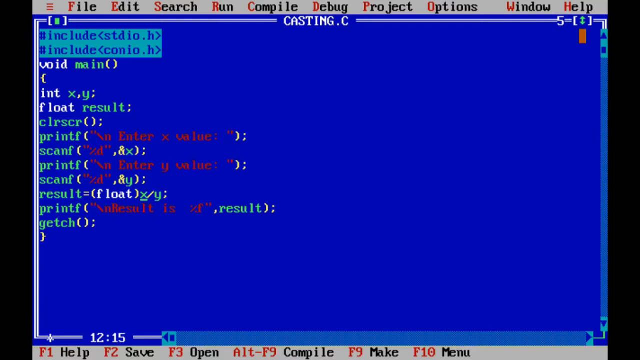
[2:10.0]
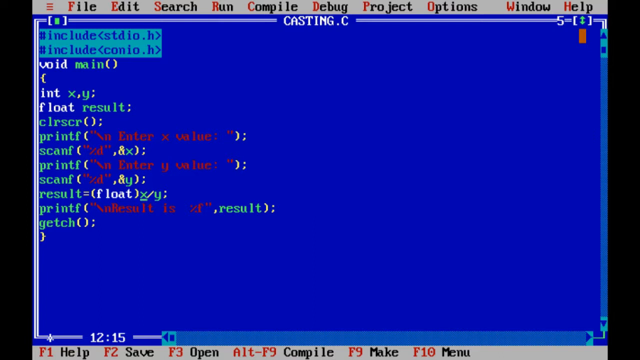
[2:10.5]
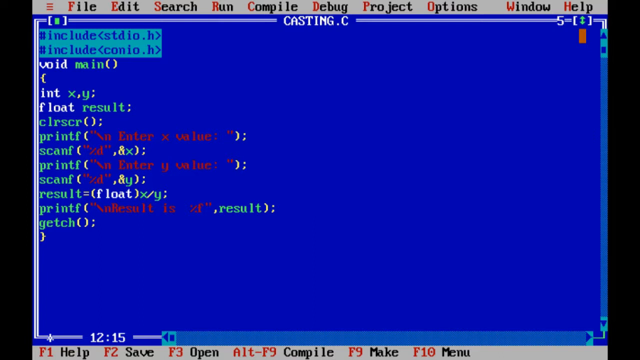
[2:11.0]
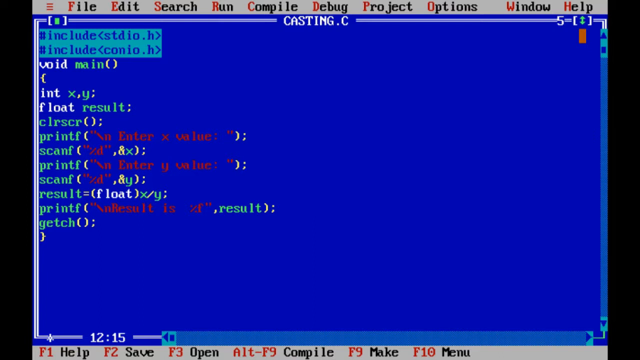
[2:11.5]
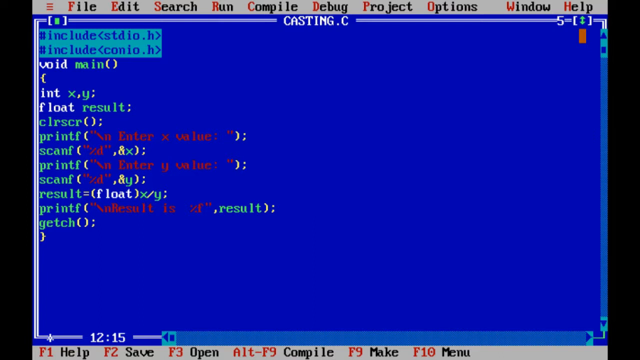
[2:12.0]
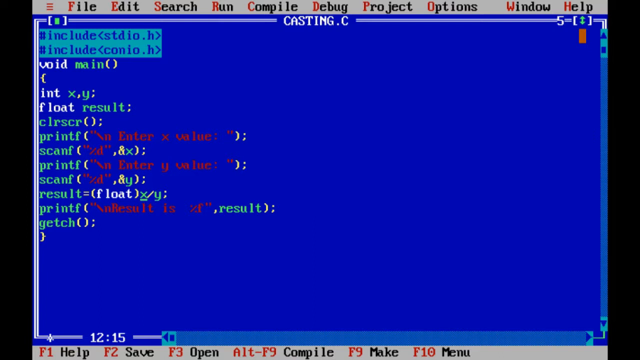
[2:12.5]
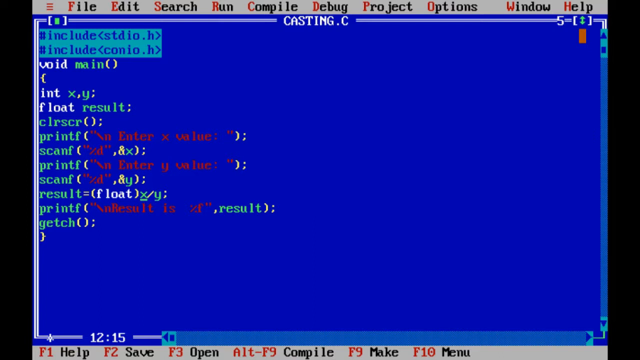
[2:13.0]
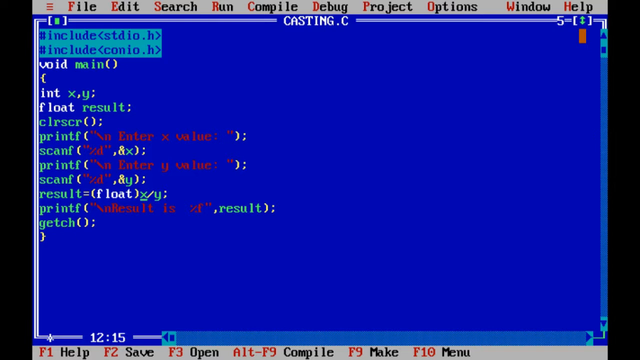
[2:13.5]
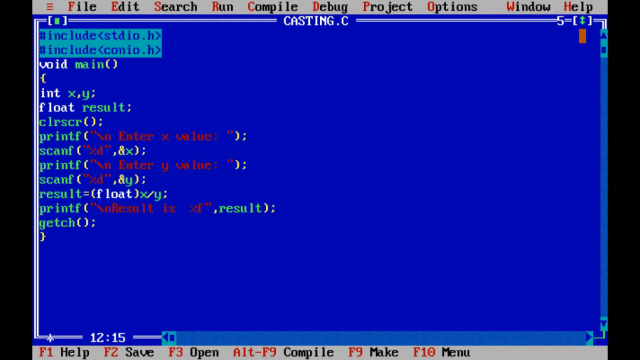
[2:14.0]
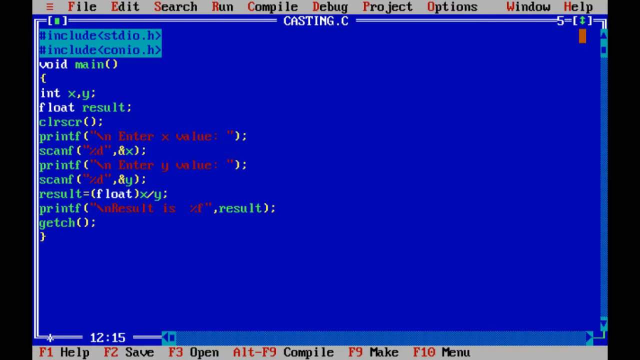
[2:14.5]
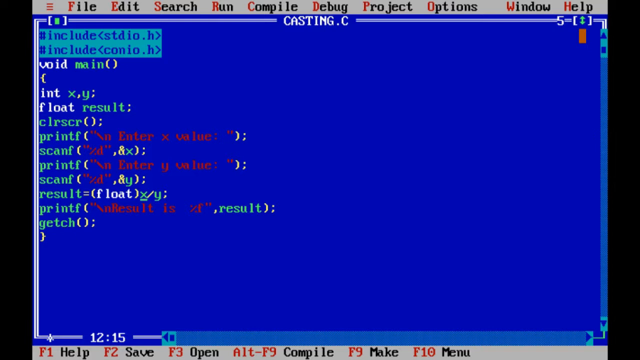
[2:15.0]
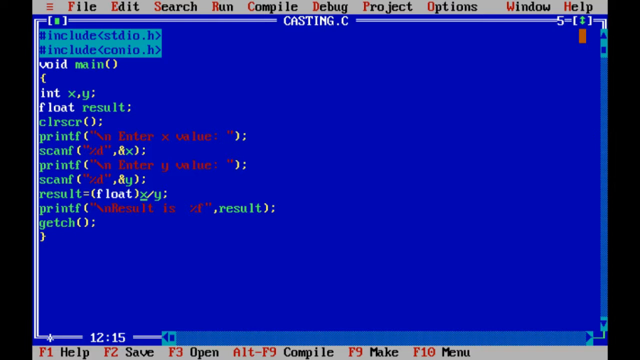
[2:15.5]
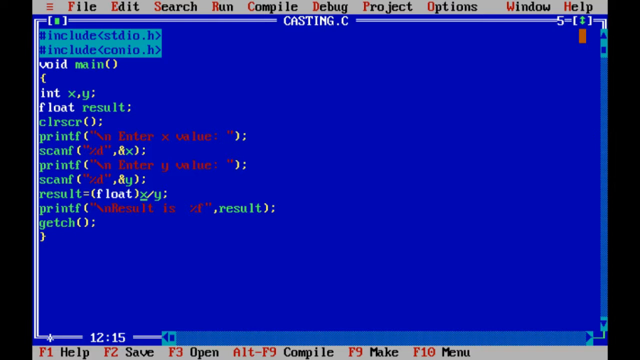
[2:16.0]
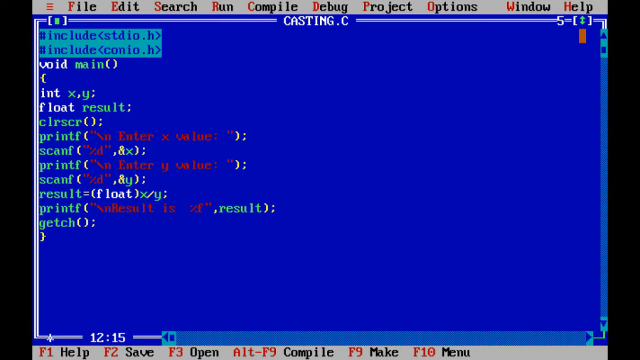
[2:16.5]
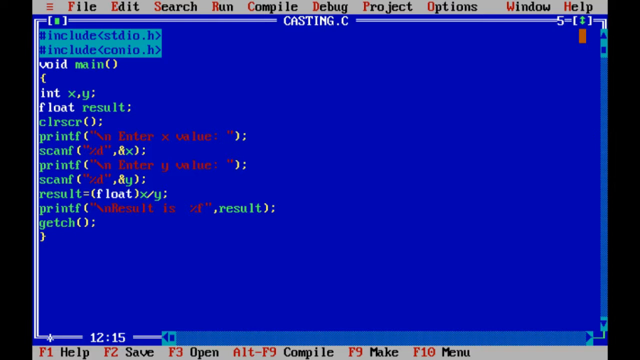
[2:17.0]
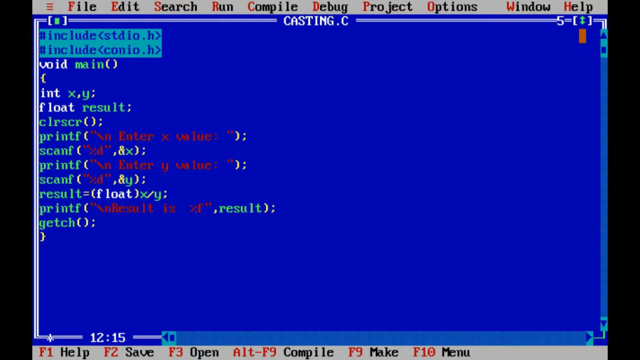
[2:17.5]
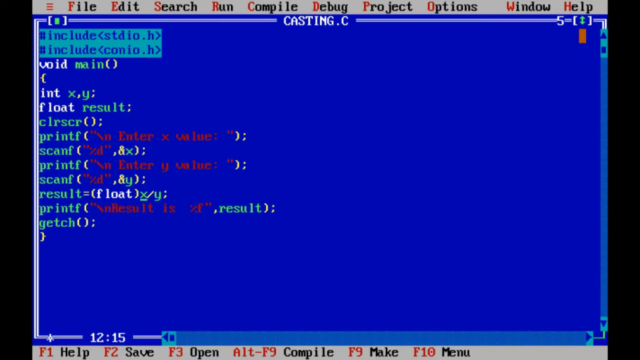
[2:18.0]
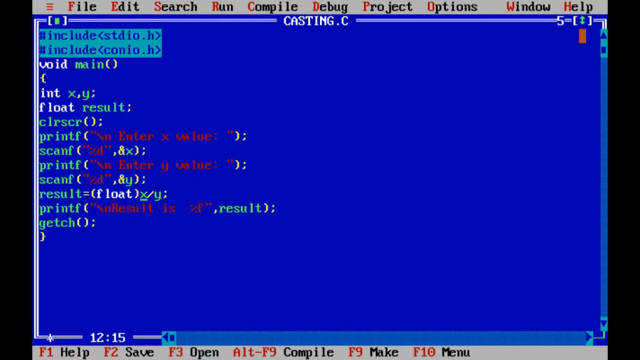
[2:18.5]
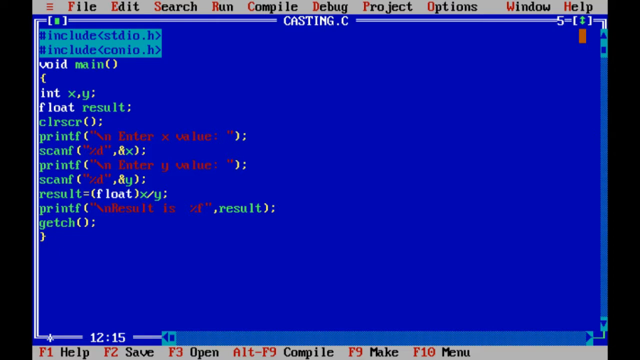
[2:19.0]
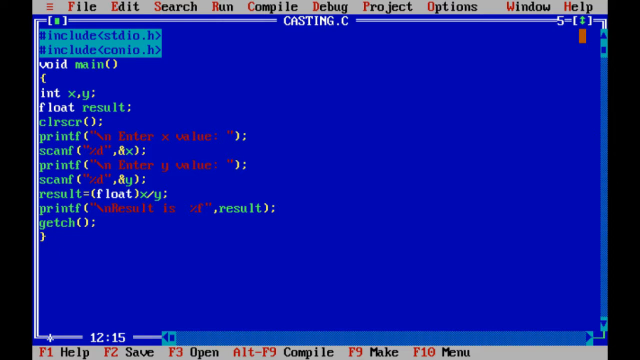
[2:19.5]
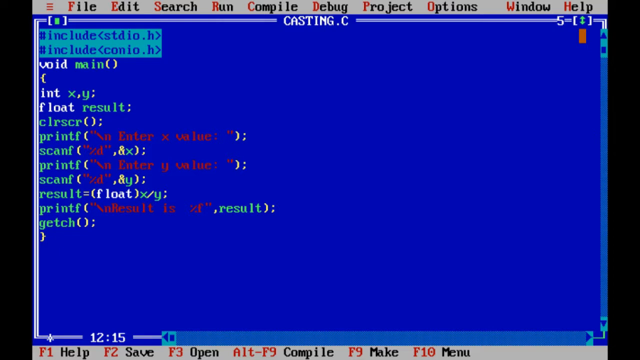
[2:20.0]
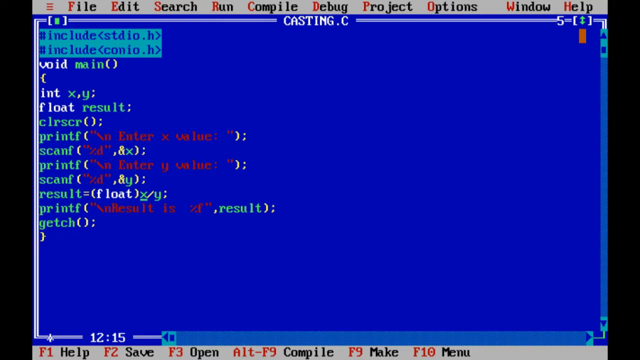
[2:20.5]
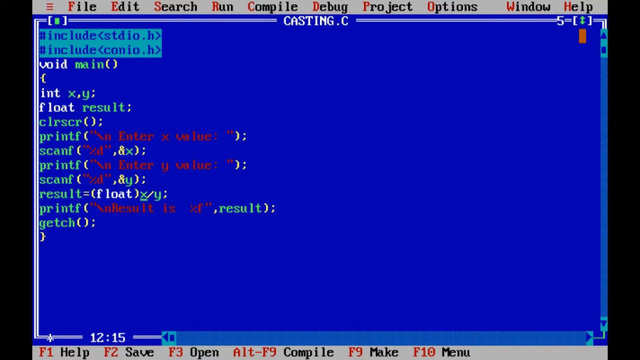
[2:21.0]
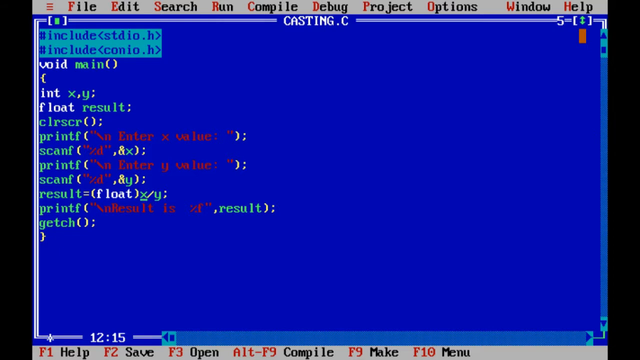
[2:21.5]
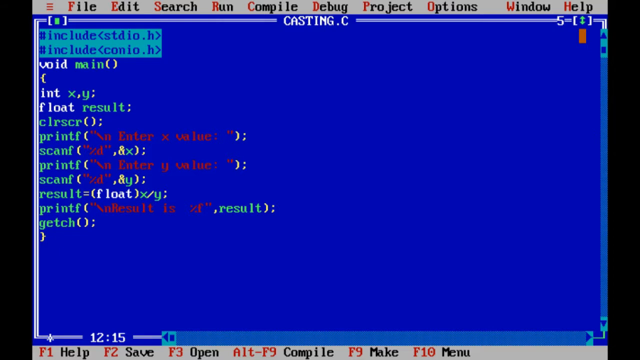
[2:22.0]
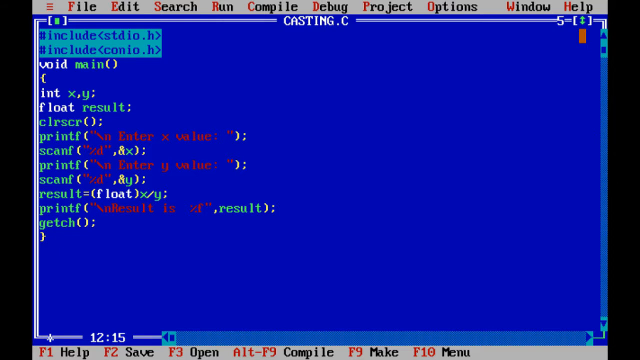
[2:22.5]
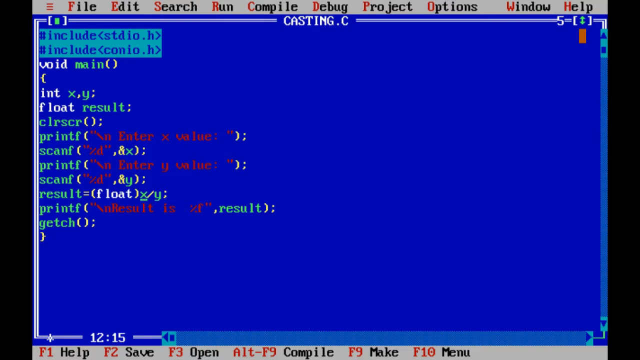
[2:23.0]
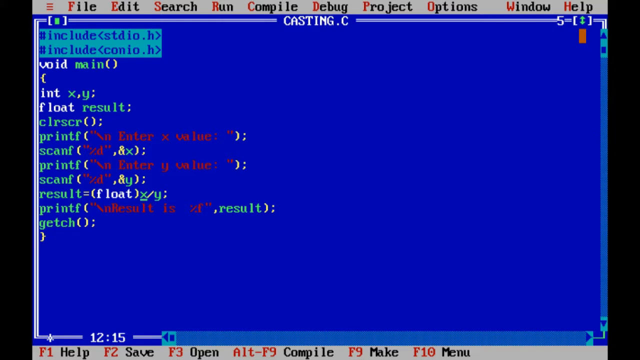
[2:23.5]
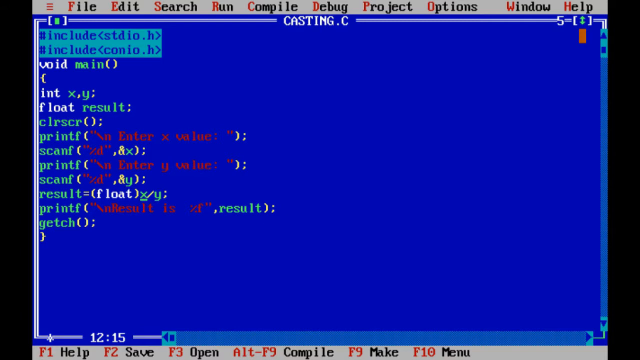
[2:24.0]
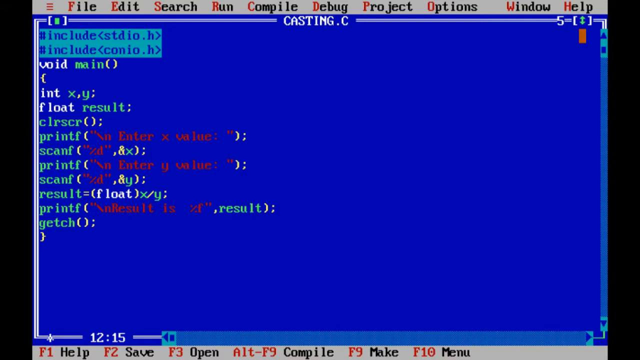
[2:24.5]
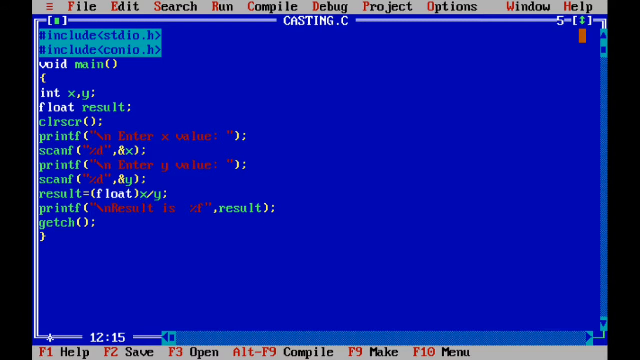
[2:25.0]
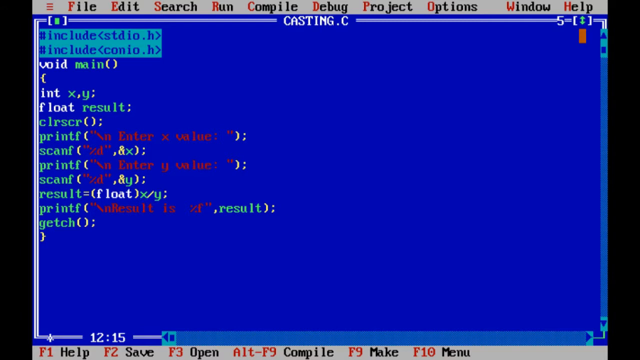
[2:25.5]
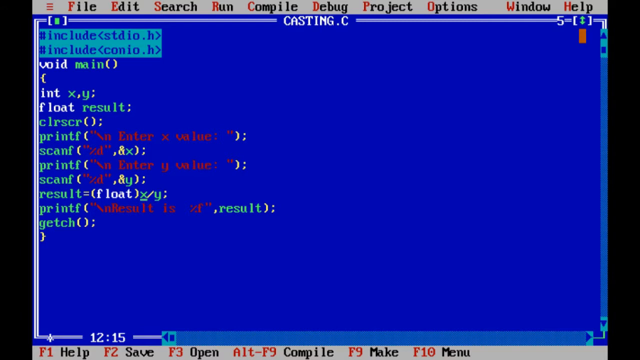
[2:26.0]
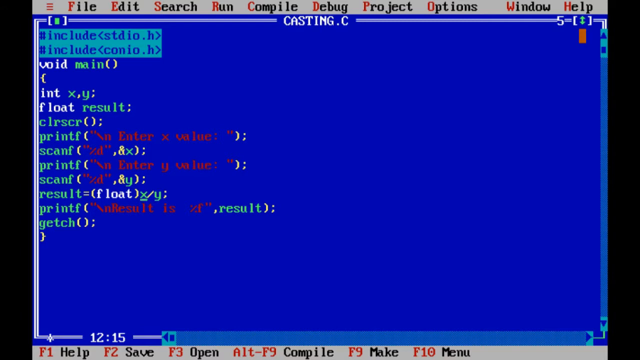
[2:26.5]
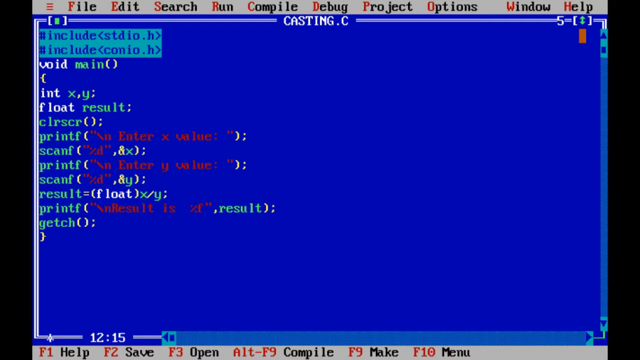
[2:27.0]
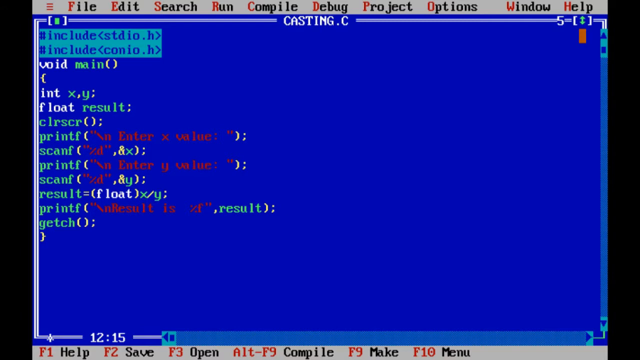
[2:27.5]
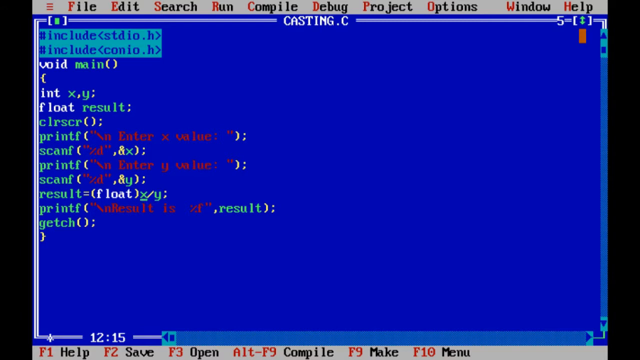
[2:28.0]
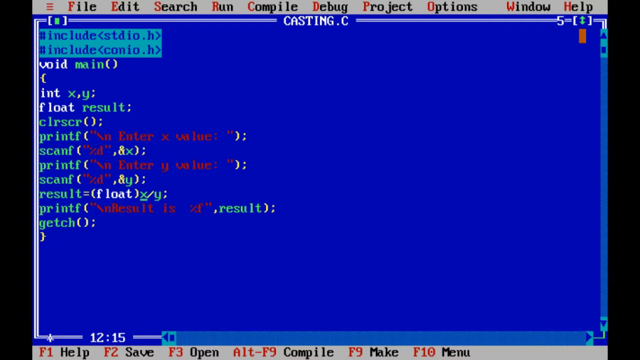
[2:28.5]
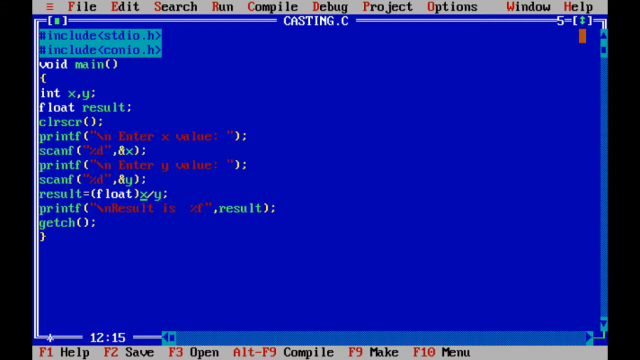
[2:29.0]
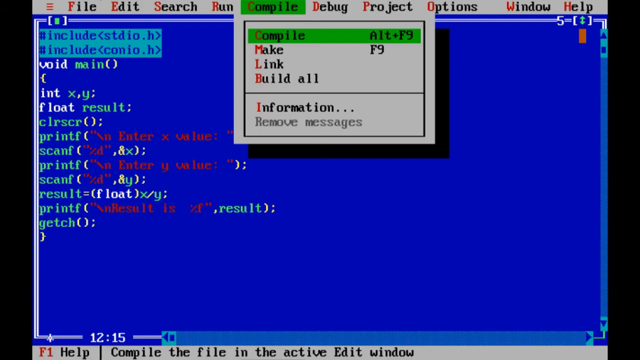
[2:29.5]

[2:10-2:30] A computer screen shows an IDE that looks like it is using C or C++, with lines of code creating a void main function. The main window has a blue background, with a grey header and footer containing control options. The user goes to the header menu and clicks the fifth option, compile, which is highlighted in green as a dropdown opens below it with six options: compile, make, link, build all, information and remove messages. The top option, compile, is highlighted in green and appears to be selected. A new screen flashes up very briefly: a grey window titled "Compiling" with quickly moving black text, showing information about the file being compiled, the lines compiled, any warnings and errors, and the available memory.